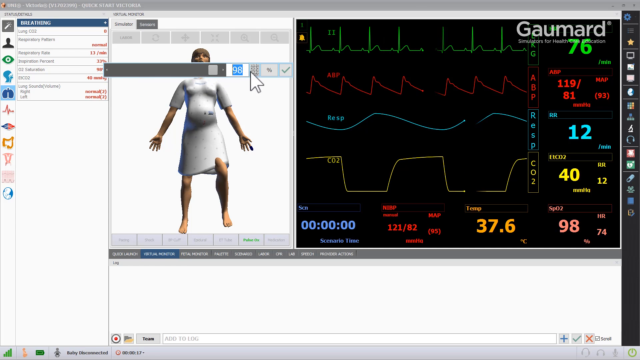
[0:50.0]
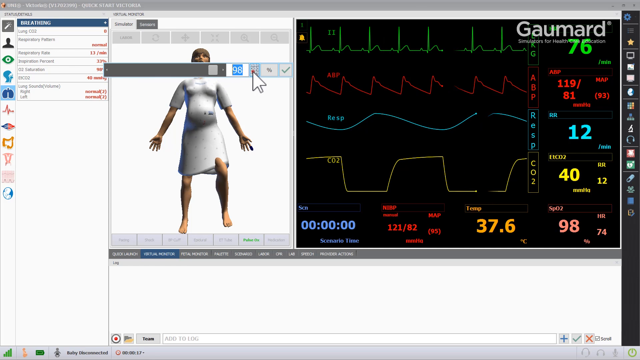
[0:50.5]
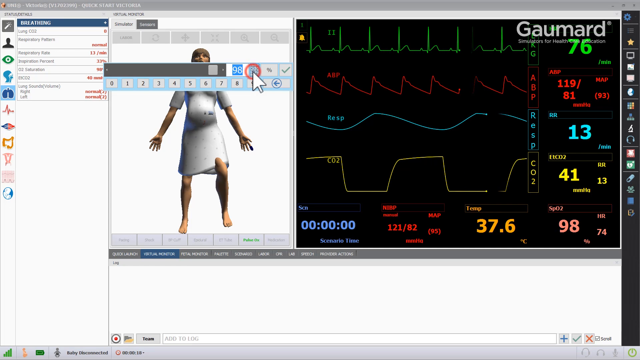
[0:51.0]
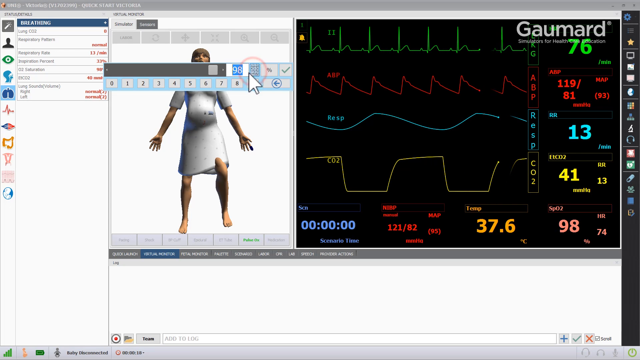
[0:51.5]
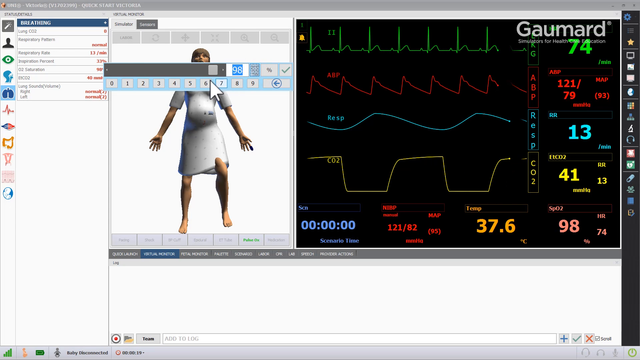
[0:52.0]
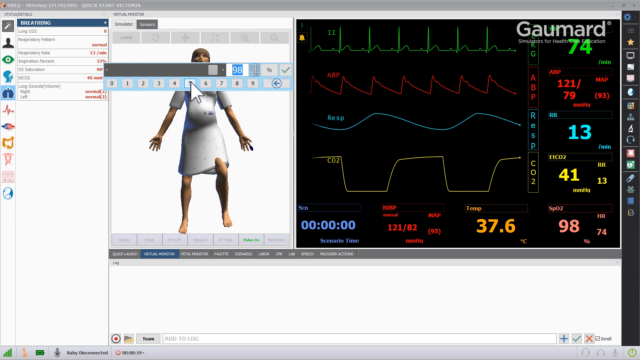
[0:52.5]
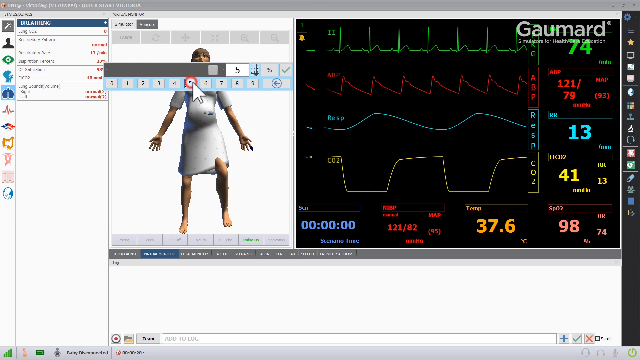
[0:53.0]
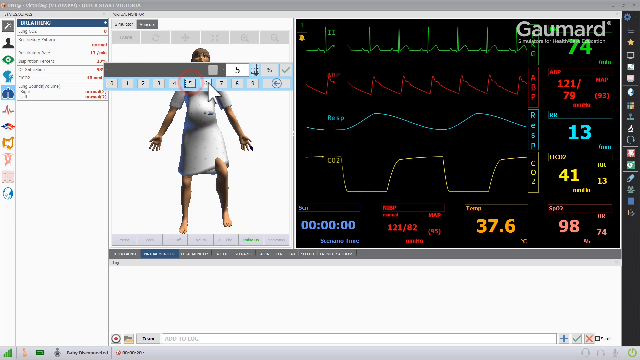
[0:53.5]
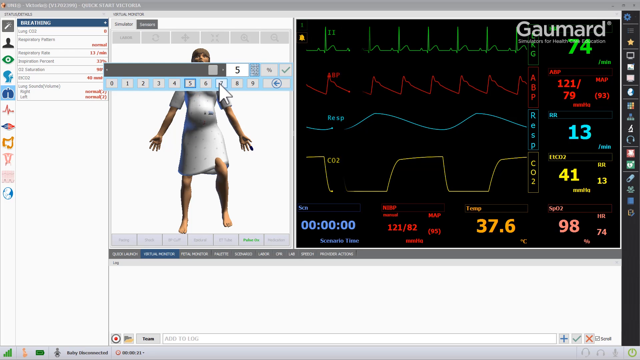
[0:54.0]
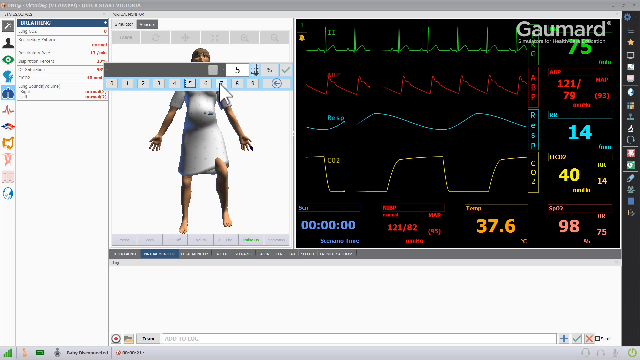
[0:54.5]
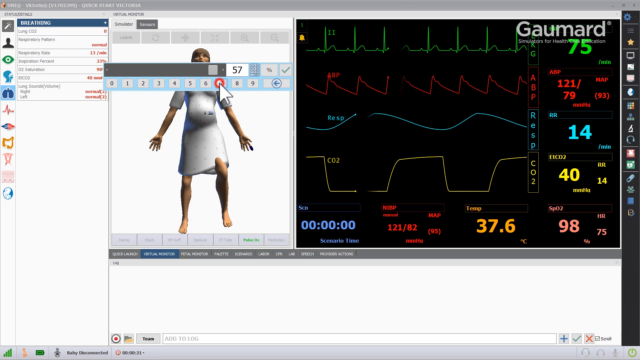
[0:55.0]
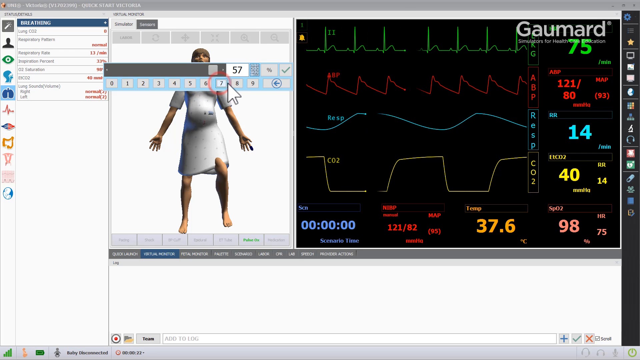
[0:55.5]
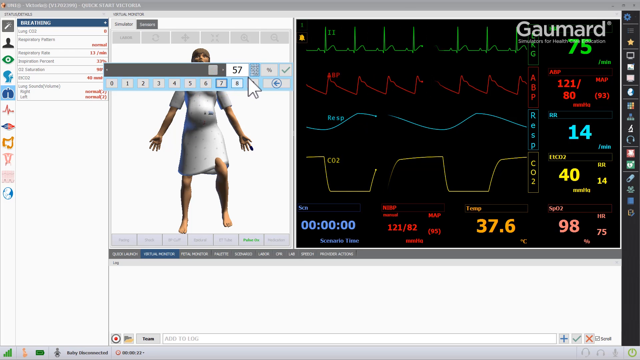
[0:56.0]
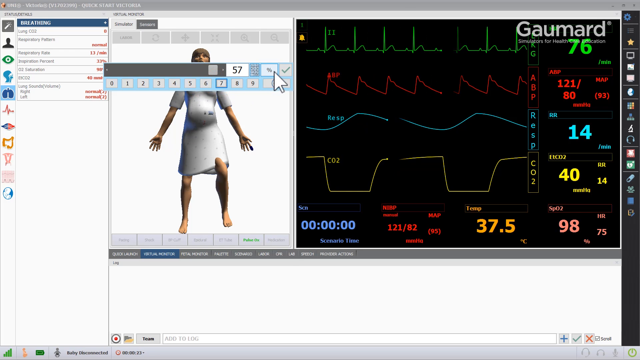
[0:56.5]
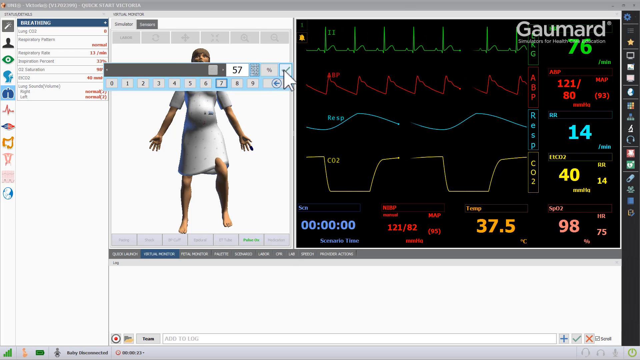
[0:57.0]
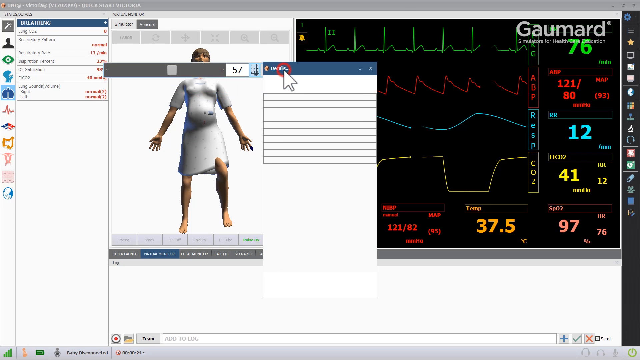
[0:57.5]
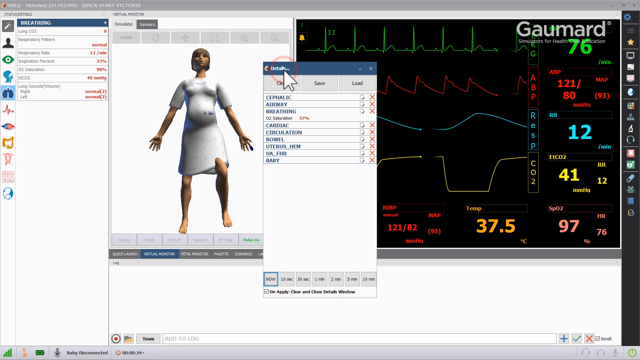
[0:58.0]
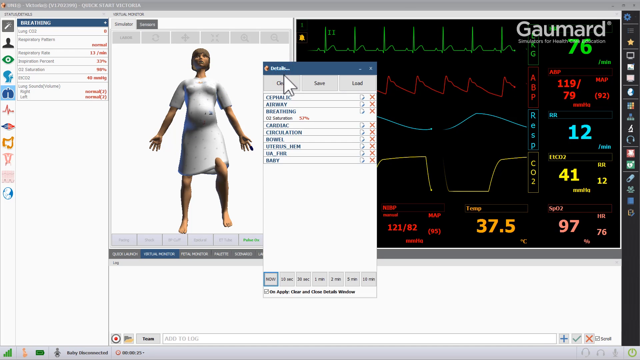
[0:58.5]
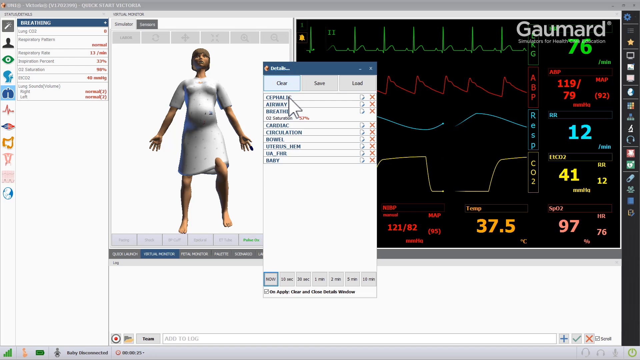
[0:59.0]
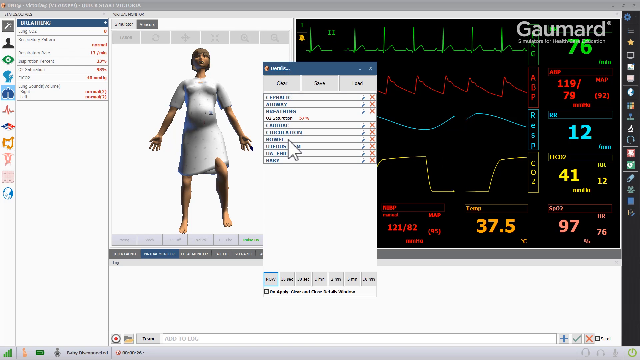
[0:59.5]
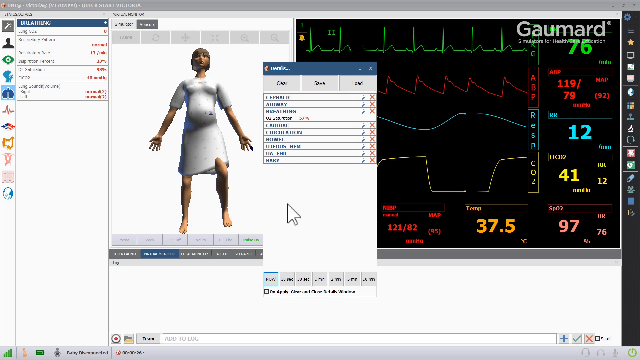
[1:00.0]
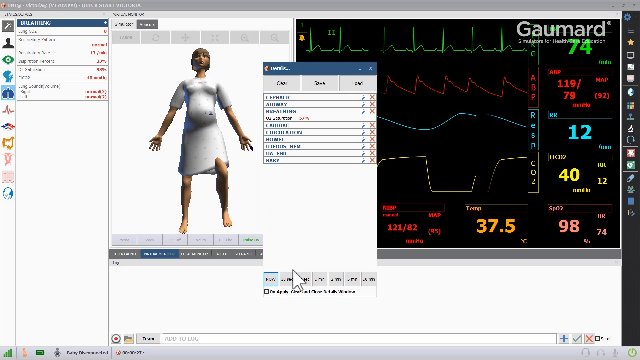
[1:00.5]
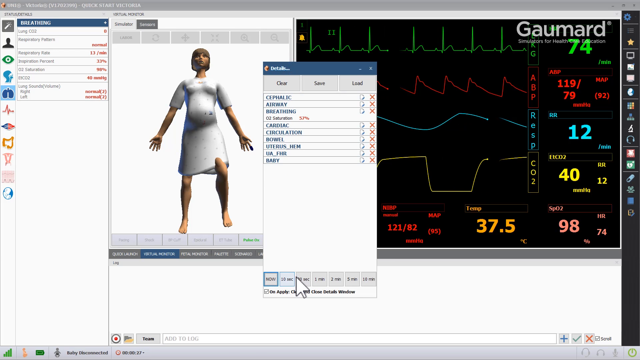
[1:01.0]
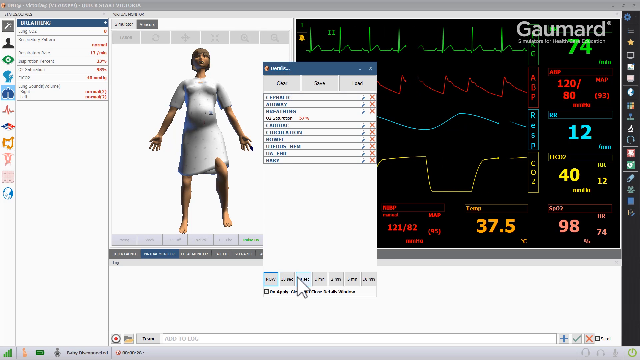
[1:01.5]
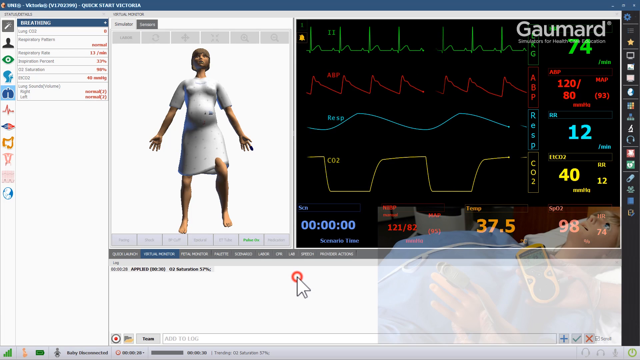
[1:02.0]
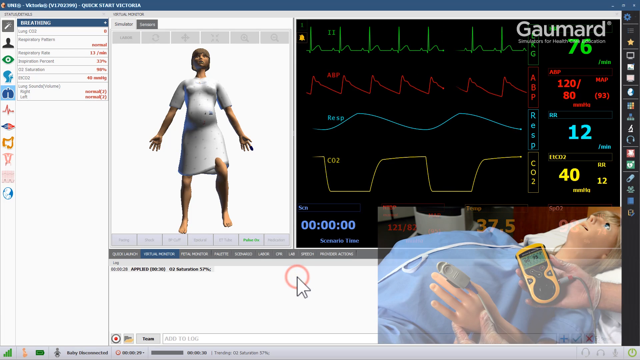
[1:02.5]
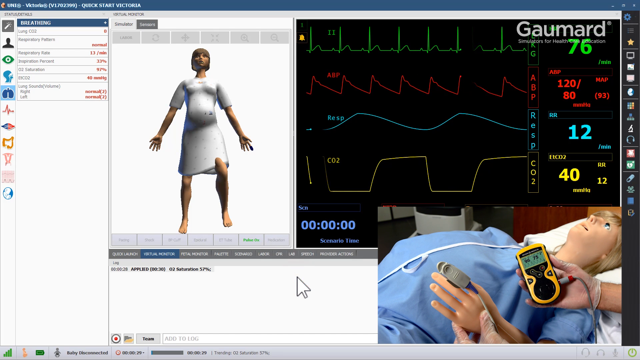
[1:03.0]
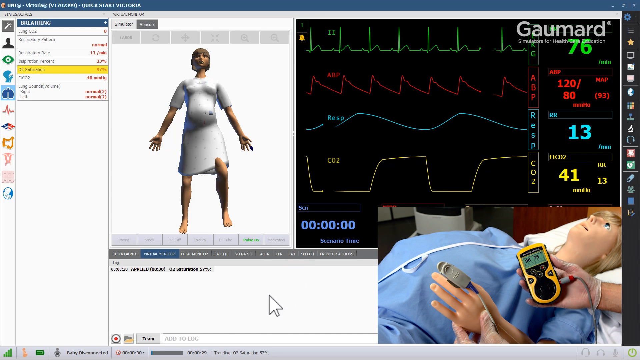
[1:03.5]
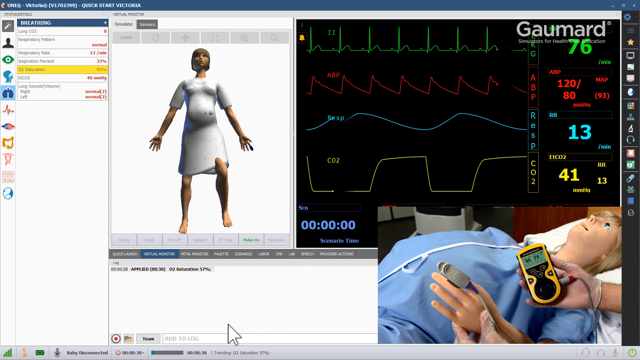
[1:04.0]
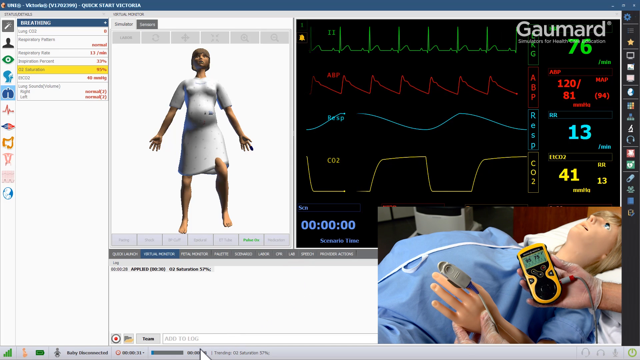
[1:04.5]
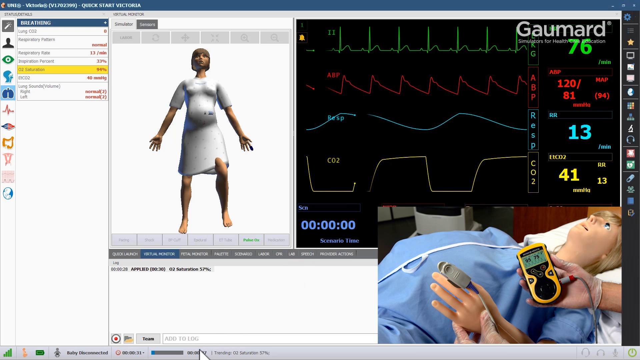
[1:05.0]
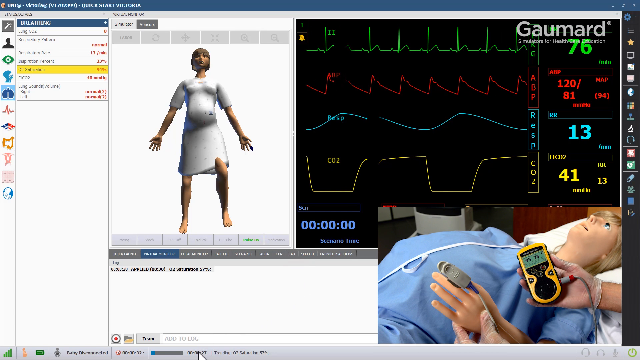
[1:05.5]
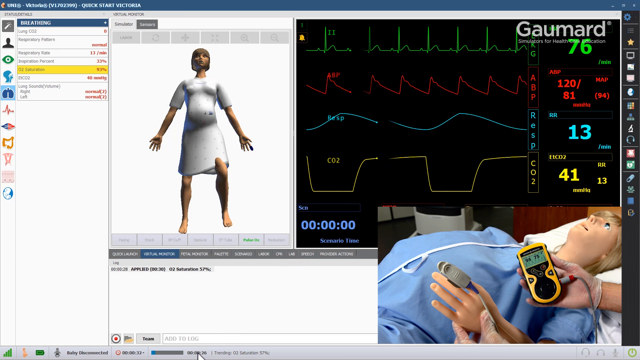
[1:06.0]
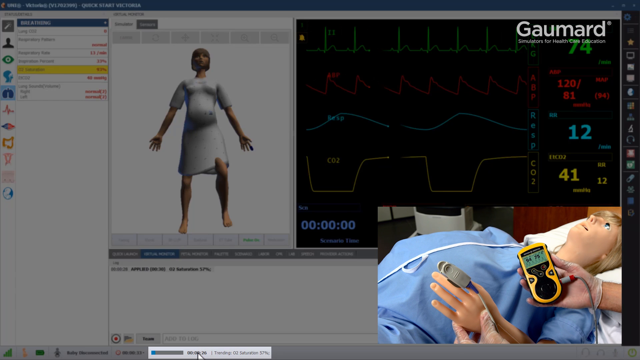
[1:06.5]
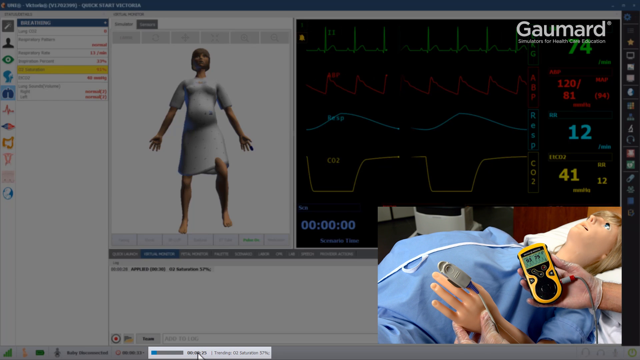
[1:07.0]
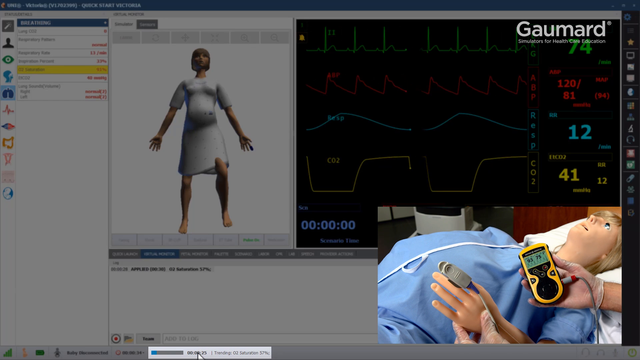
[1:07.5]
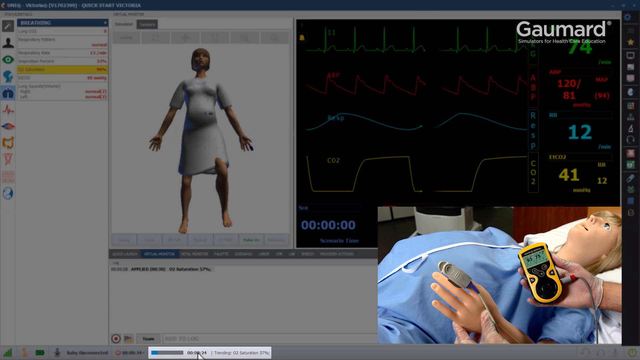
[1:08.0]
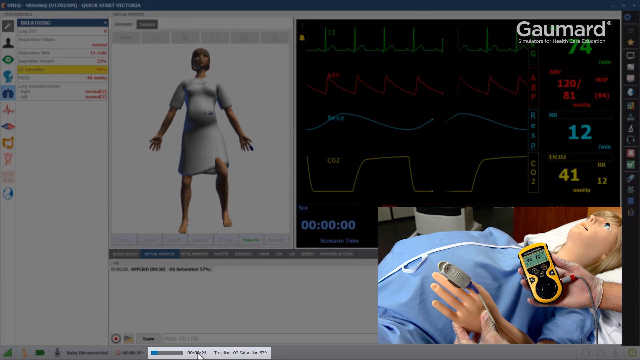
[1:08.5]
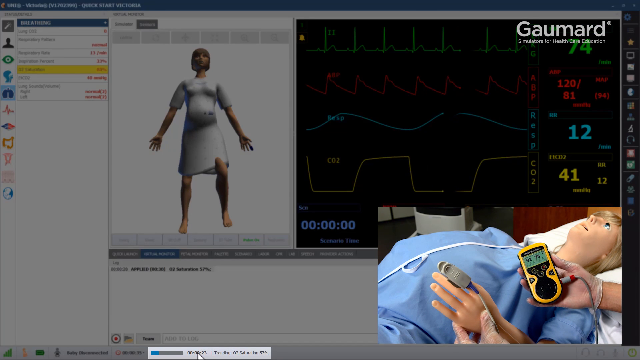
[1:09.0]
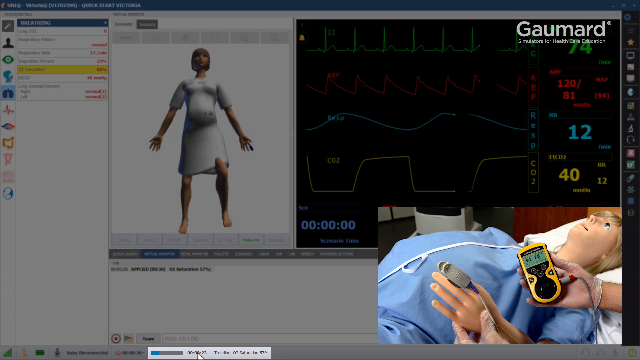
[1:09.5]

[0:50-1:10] The demonstration continues, showing research, how to place the device, and the results obtained.